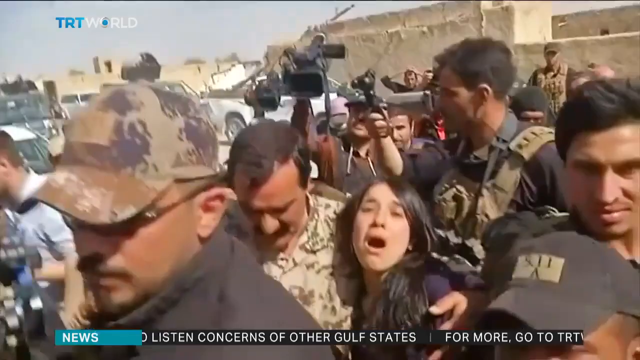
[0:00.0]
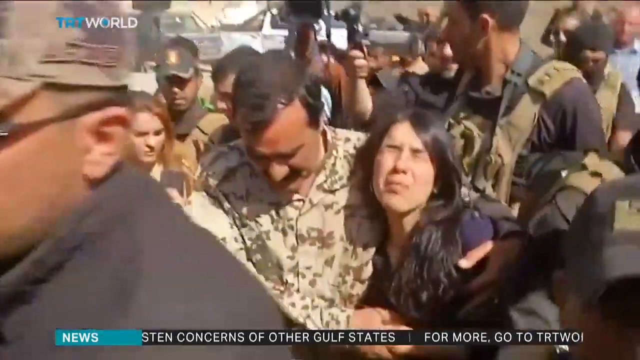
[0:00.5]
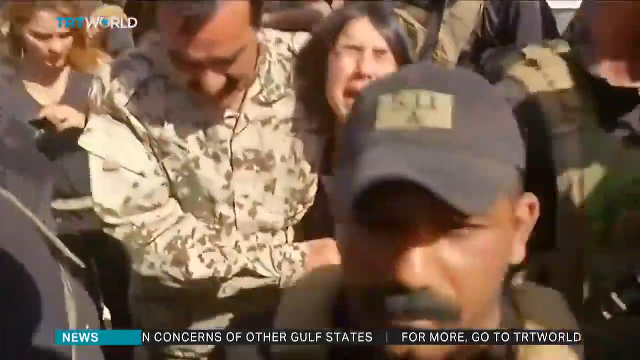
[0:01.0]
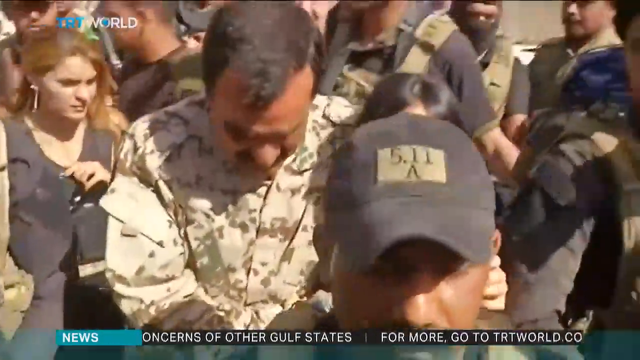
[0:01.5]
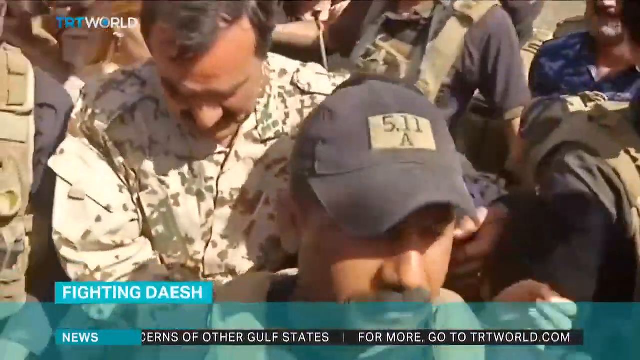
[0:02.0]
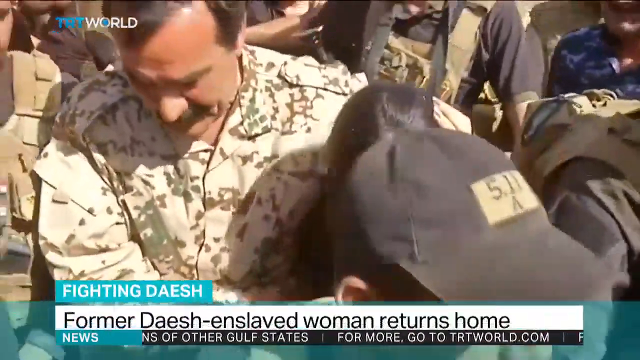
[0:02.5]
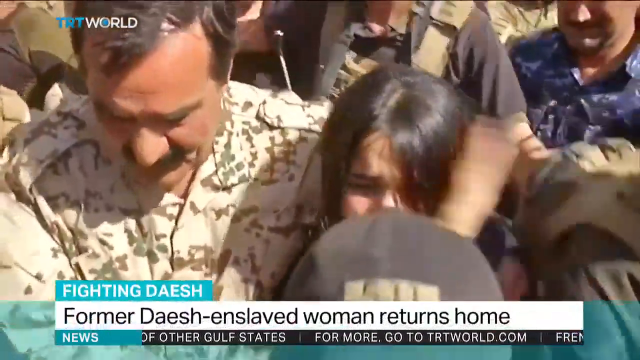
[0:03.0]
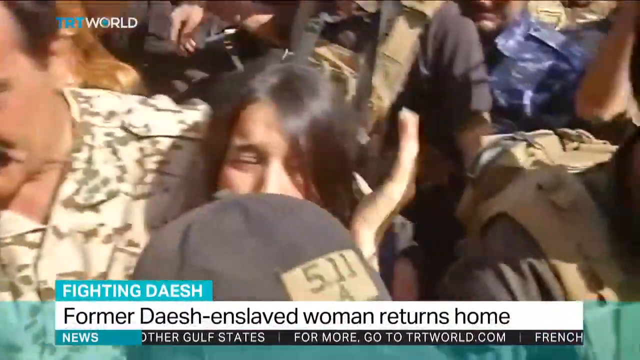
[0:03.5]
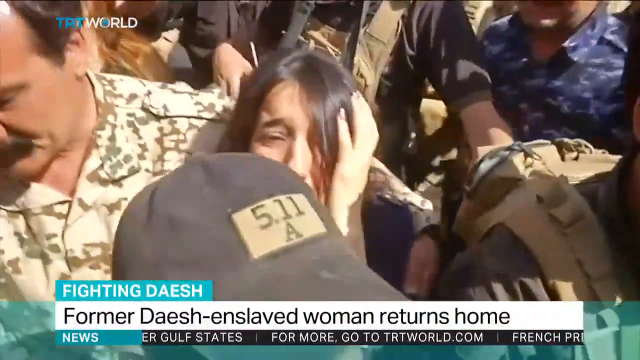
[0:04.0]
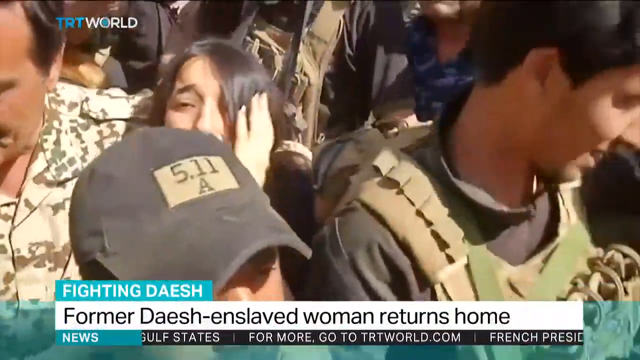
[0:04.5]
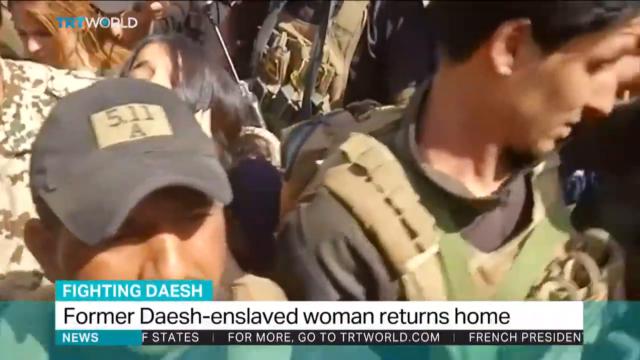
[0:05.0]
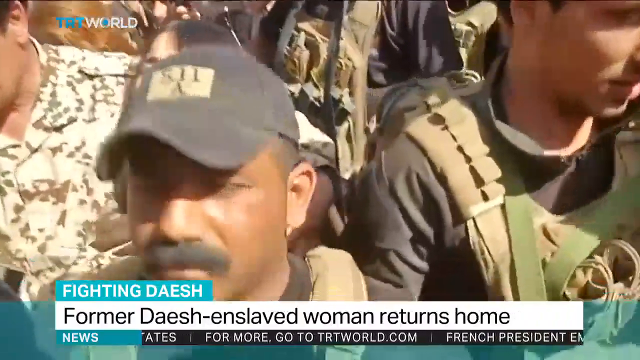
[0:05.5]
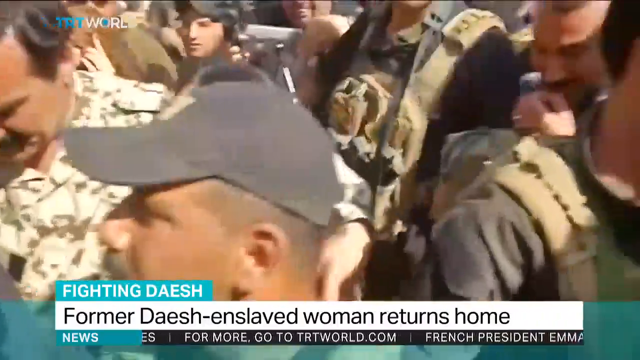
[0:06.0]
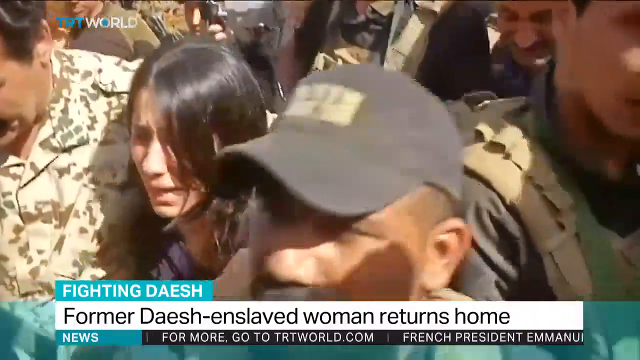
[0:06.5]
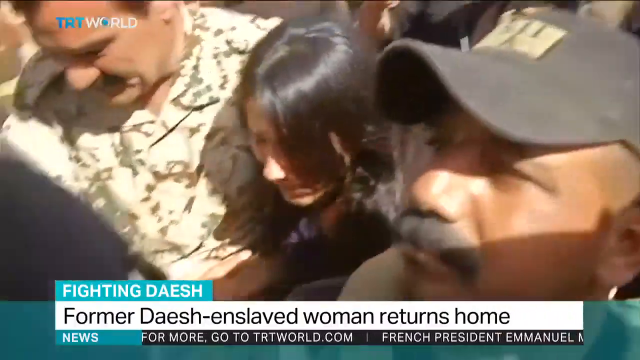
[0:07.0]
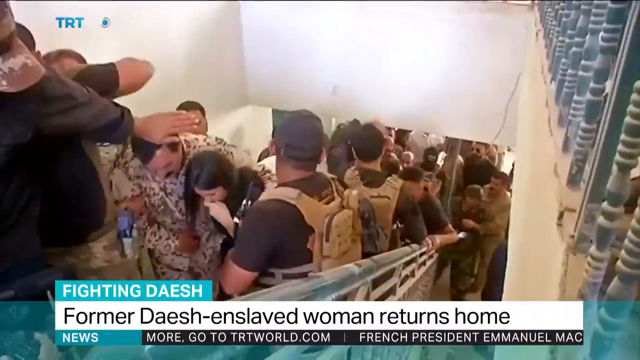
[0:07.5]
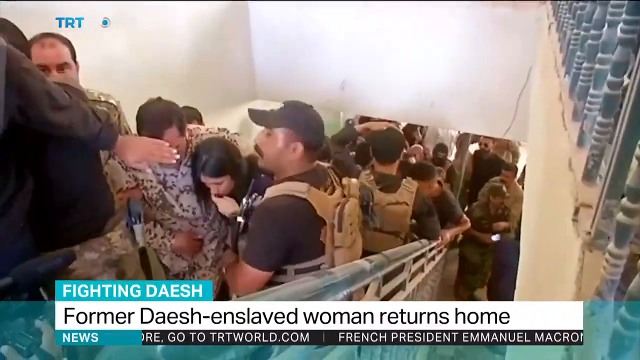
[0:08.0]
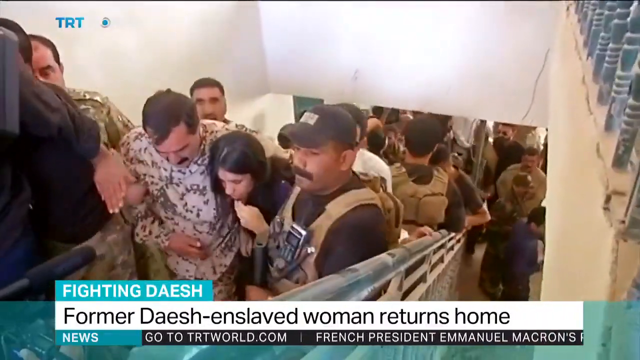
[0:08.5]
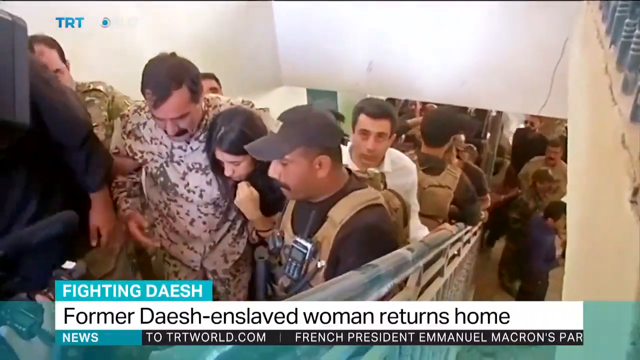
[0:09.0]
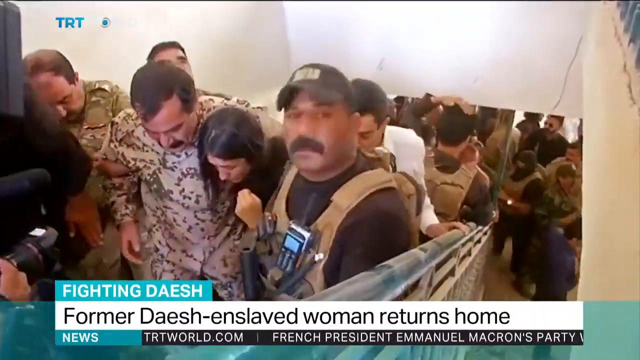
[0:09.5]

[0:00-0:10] The scene appears to show people who have suffered some great hardship. A woman in the middle of the frame is crying and sobbing, putting her hand up to her head. She has long, dark hair and seems extremely distressed. A man is holding her up and walking with her. He has dark hair and a thick mustache and wears a multicolored button-down shirt that may be some sort of army attire; he may be a soldier or possibly a family member. They are surrounded by other people who appear to be wearing combat attire. One man has on a black baseball cap with some writing on the front, a black t-shirt, and what looks like a gray tactical vest over it. There are lots of people in the image. Another woman in the background, with long, straight, dark hair and a black top, does not appear to be in distress.